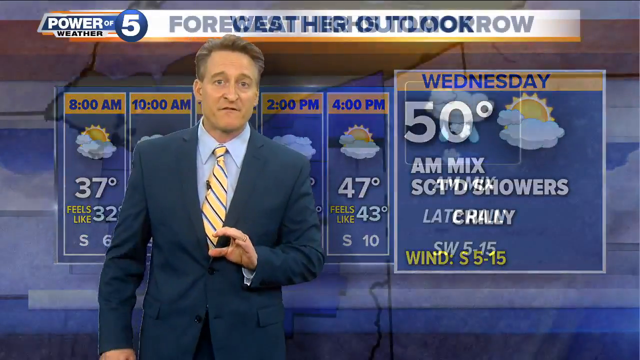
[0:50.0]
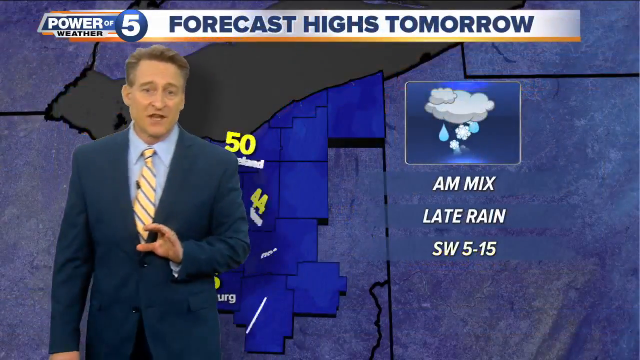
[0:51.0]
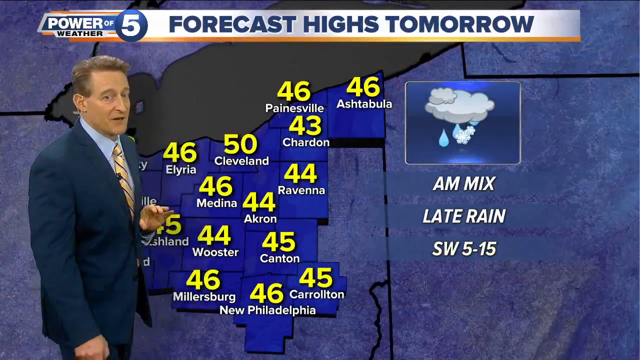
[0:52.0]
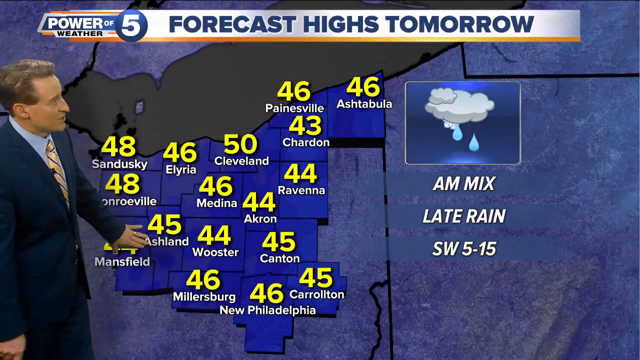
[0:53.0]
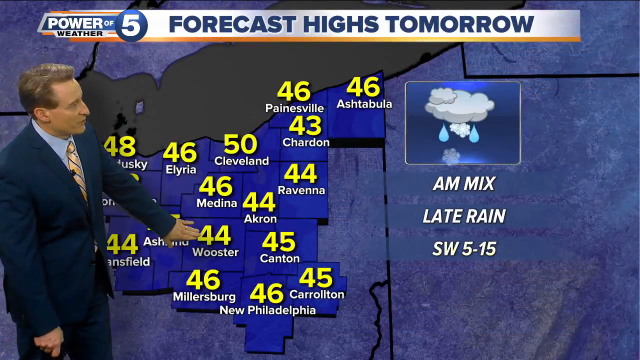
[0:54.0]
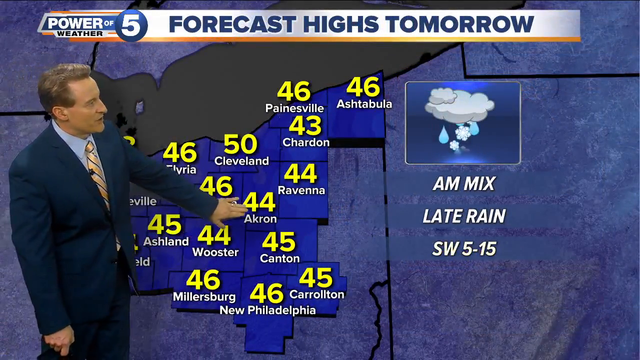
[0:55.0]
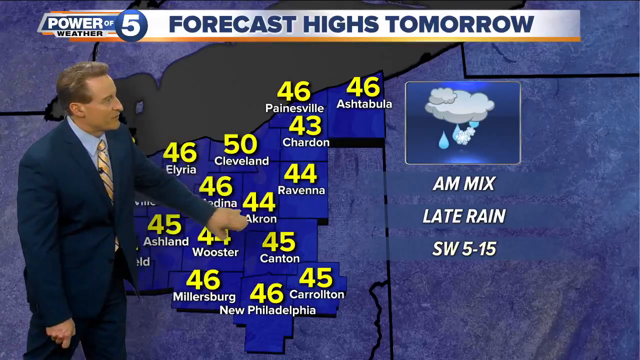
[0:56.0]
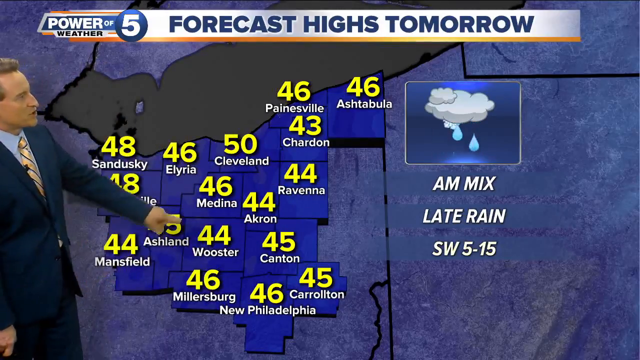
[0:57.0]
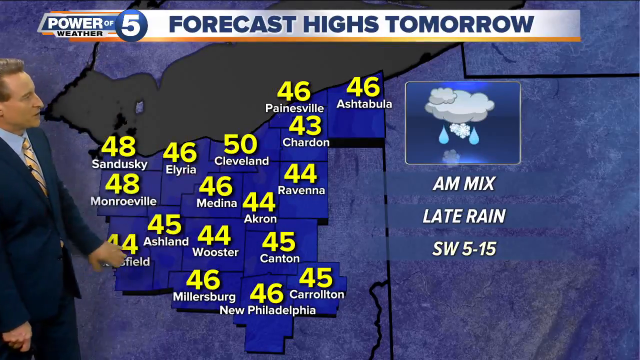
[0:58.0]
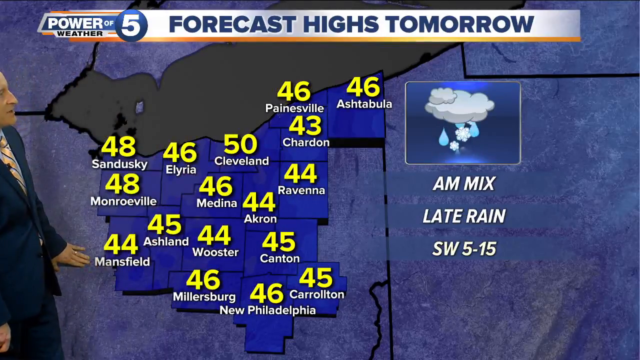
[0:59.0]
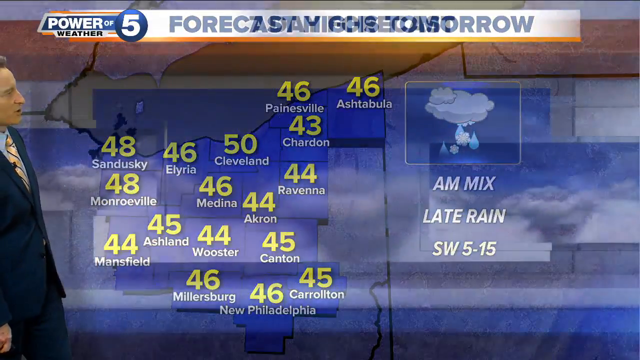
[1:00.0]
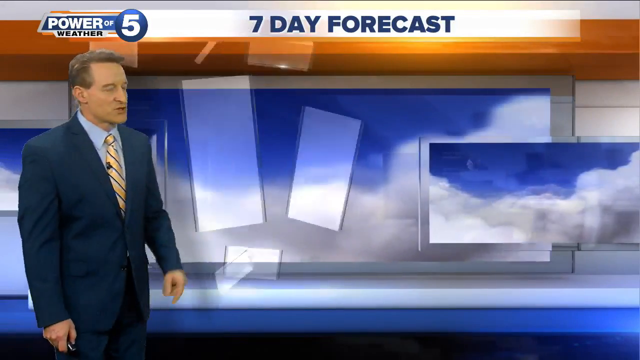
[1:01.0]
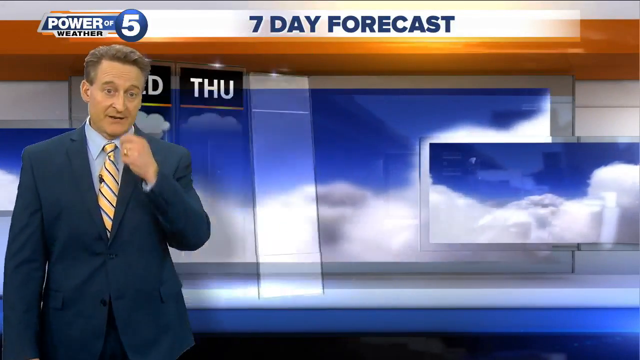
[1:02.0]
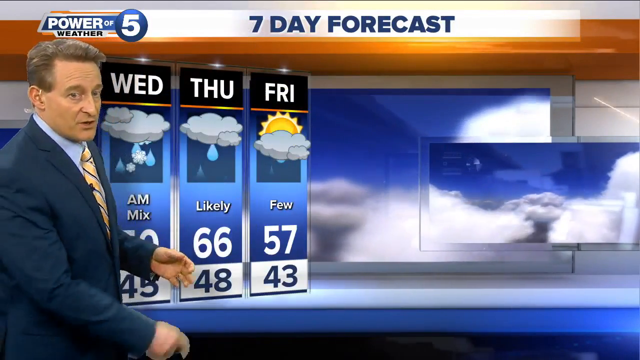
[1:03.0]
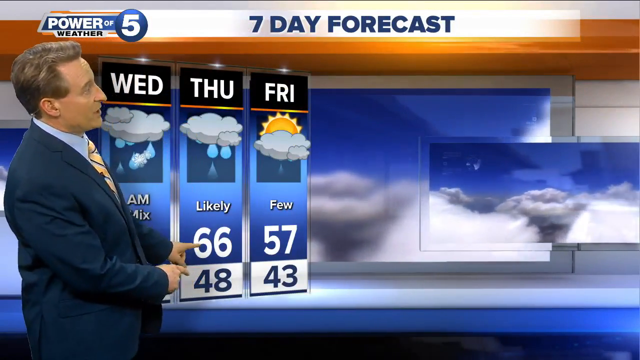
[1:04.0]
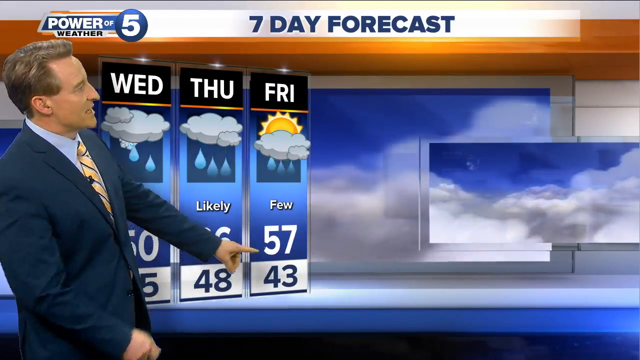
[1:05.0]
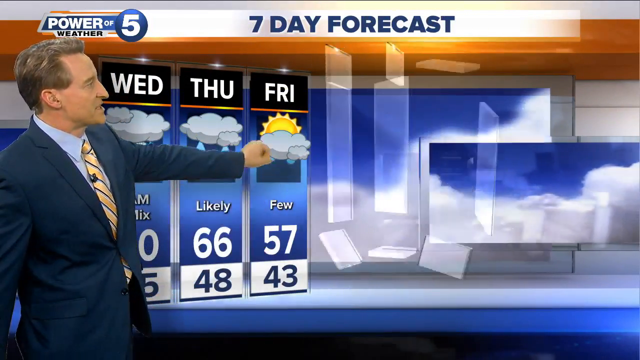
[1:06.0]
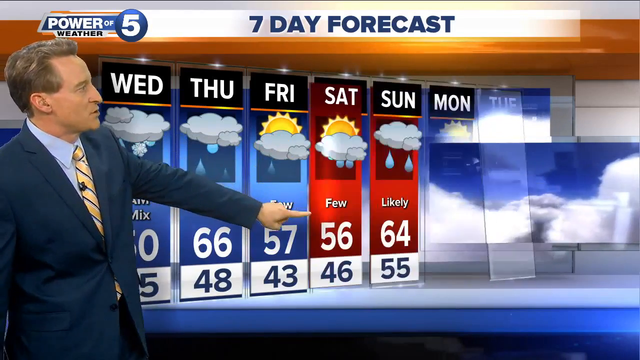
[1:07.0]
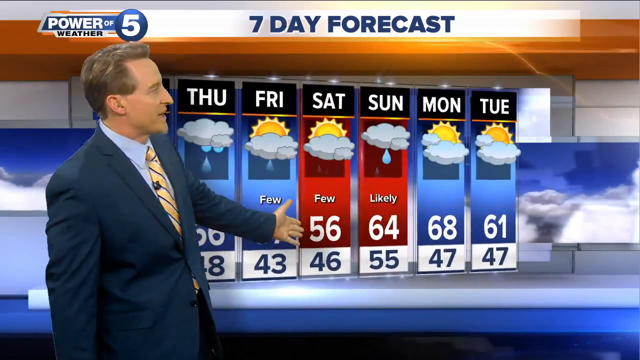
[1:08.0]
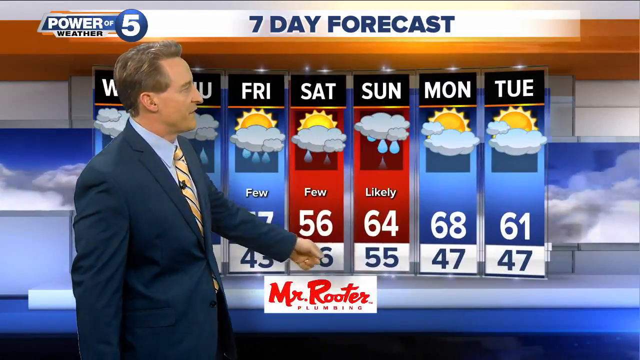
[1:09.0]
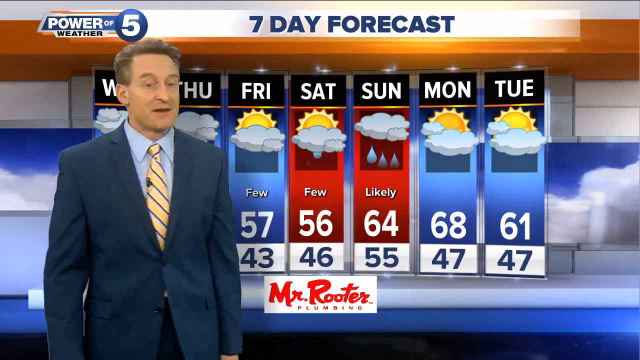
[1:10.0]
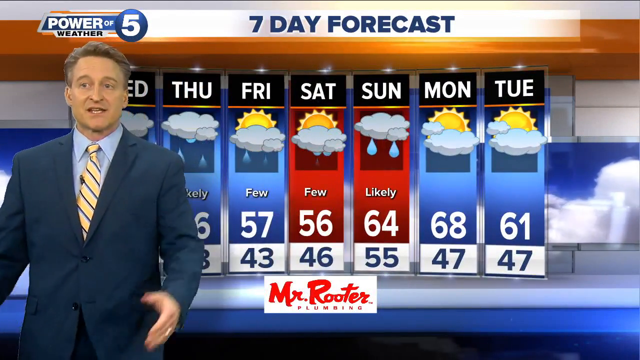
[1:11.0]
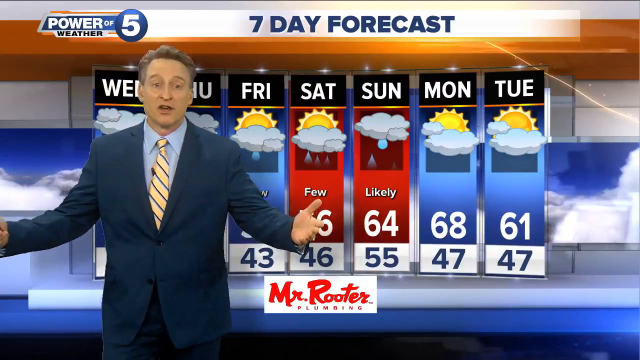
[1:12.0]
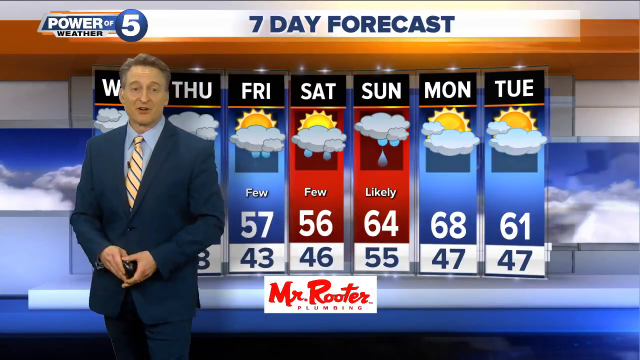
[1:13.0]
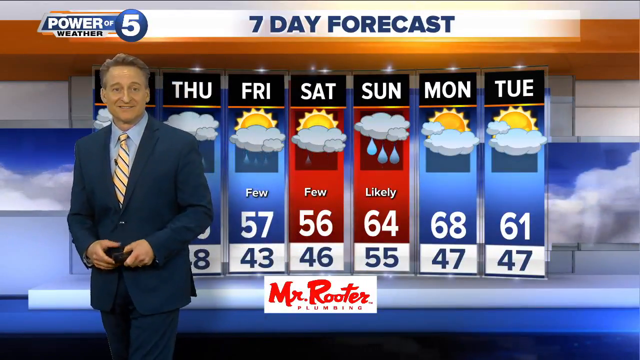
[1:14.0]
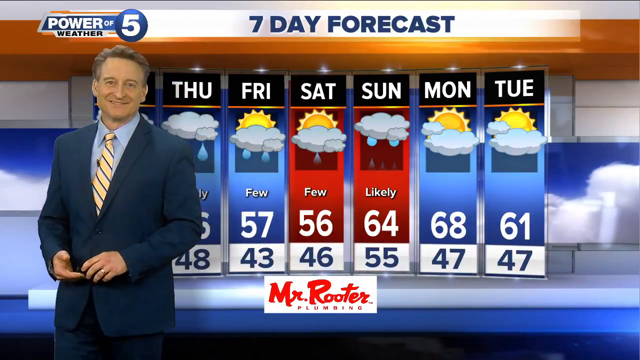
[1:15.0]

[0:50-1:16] A person who most likely is a reporter, wearing a blue suit, a blue shirt and a tie, is on screen. Text at the top reads "Power of Weather 5" and "7 day forecast". Highs for tomorrow are listed: 48 Sandusky, 46 Elyria, 50 Cleveland, 46 Bainesville, 46 Ashtabula, 43 Chardon, 44 Ravenna, 44 Akron, 46 Medina, 45 Canton, 45 Carleton, 46 New Philadelphia, 46 Millersburg, 44 Worcester, 48 Monosval and 44 Mansfield. Beside the list it reads "AM mix light rain SW 5 to 15". The next screen shows a 7-day weather forecast: Wednesday a mix at 50, Thursday 66, Friday 57, Saturday 56, Sunday 64, Monday 68 and Tuesday 61. Below the forecast it reads "Mr. Ruta plumbing".